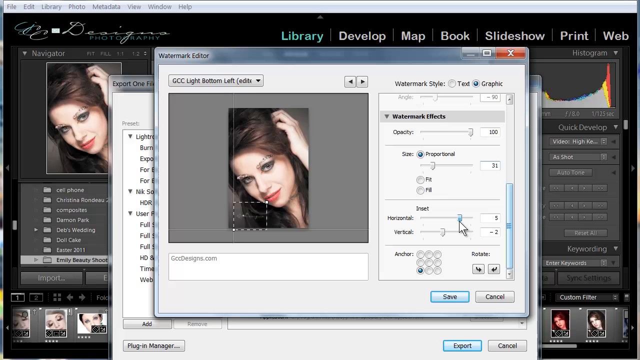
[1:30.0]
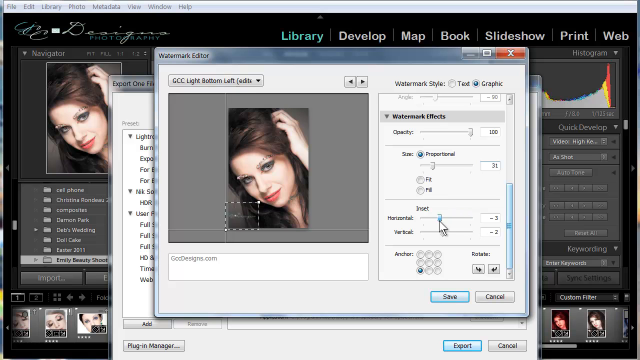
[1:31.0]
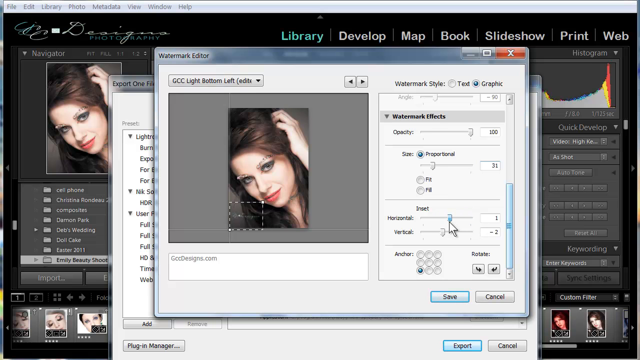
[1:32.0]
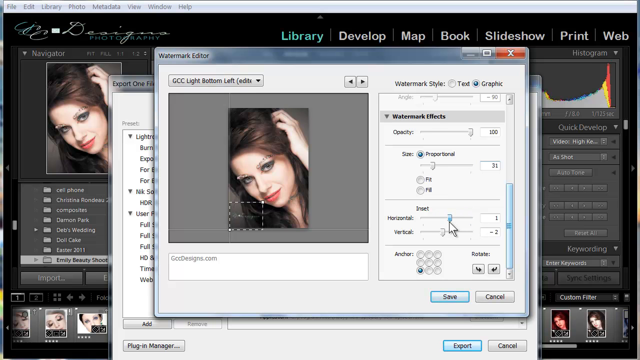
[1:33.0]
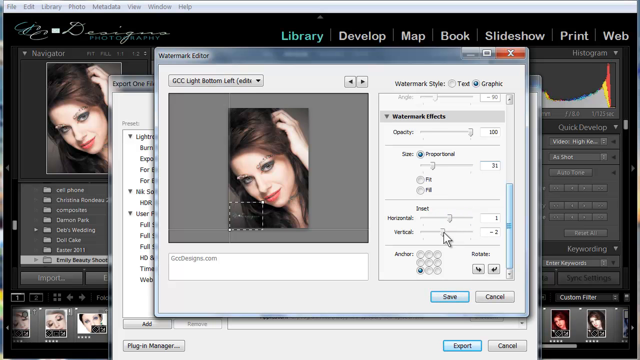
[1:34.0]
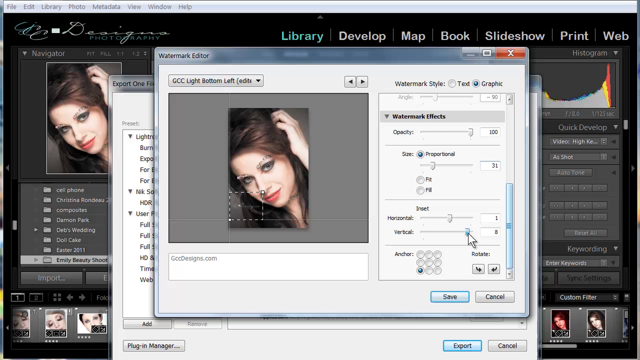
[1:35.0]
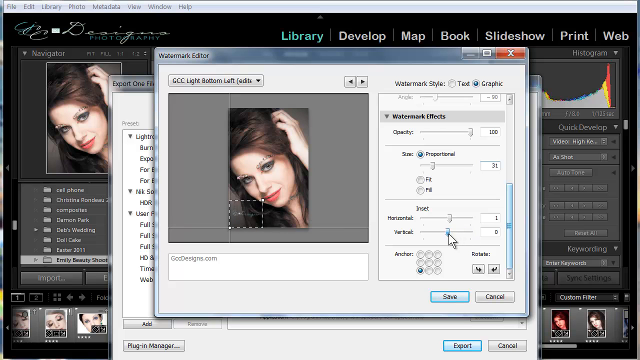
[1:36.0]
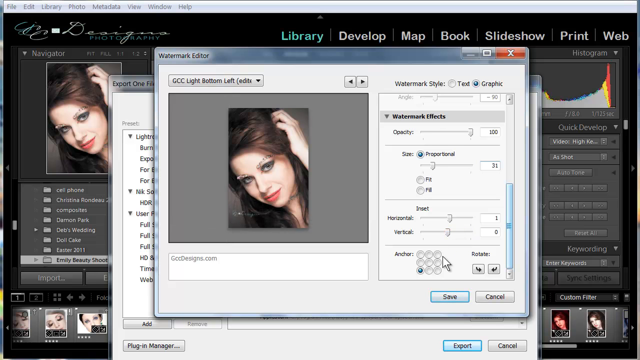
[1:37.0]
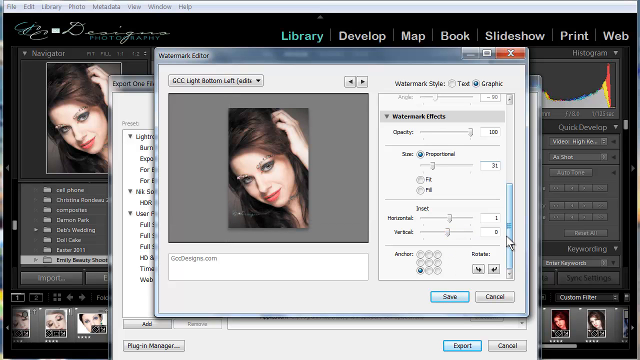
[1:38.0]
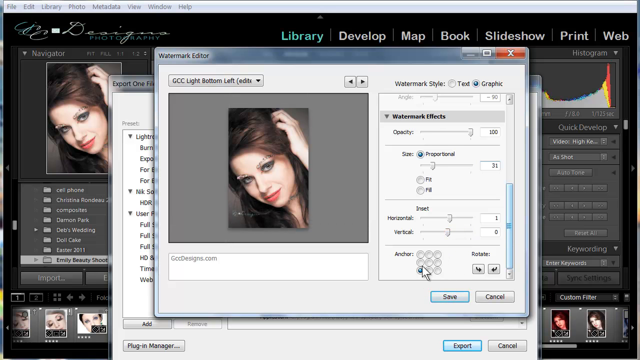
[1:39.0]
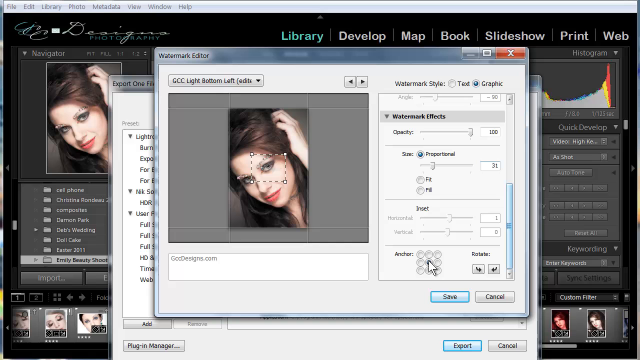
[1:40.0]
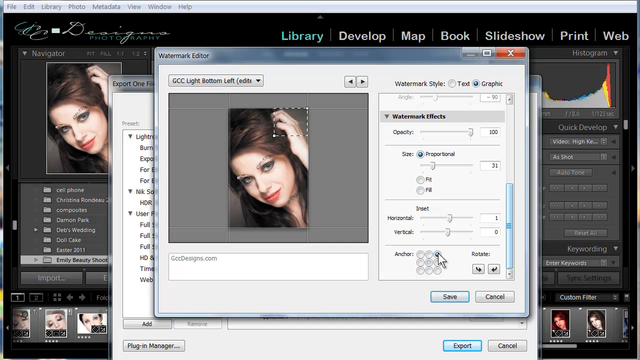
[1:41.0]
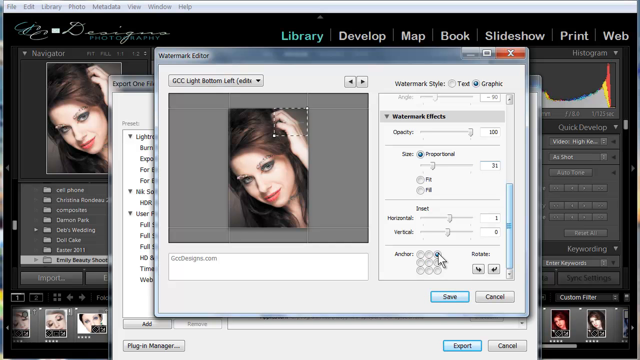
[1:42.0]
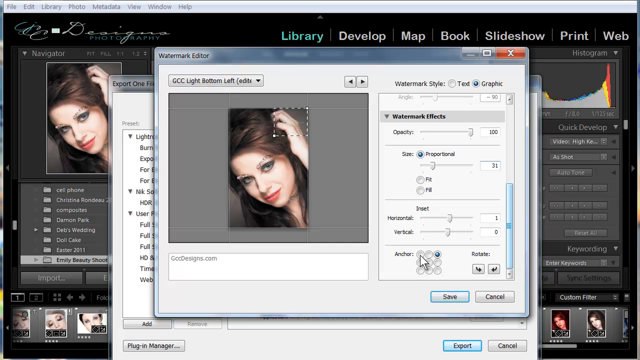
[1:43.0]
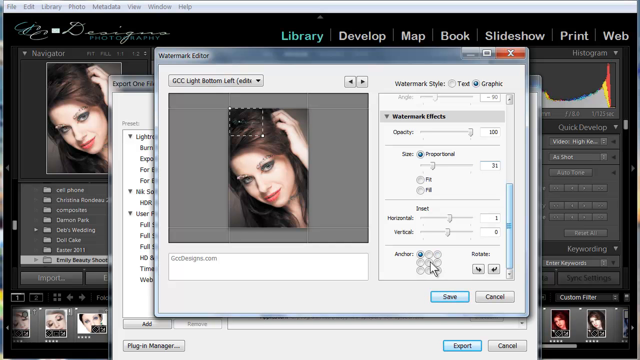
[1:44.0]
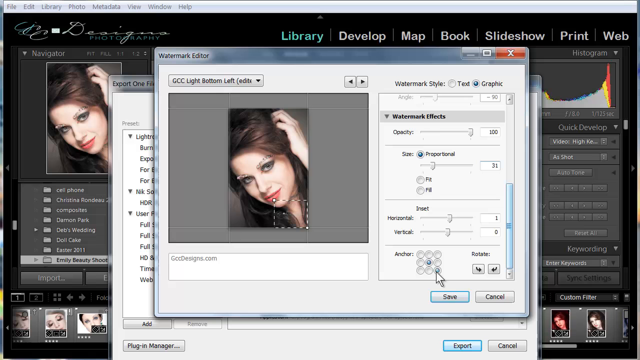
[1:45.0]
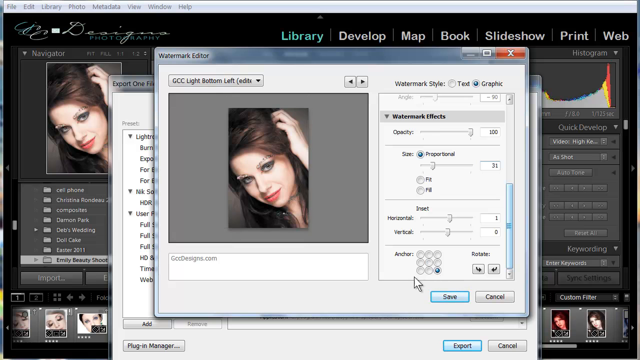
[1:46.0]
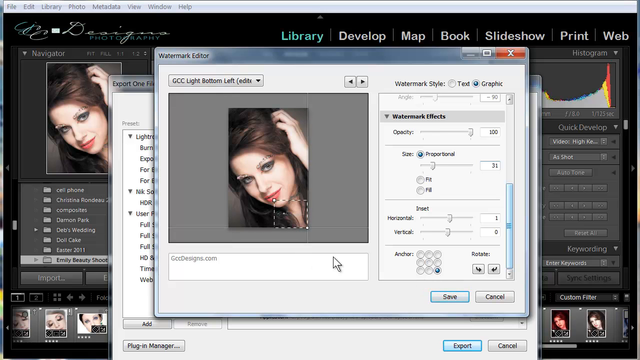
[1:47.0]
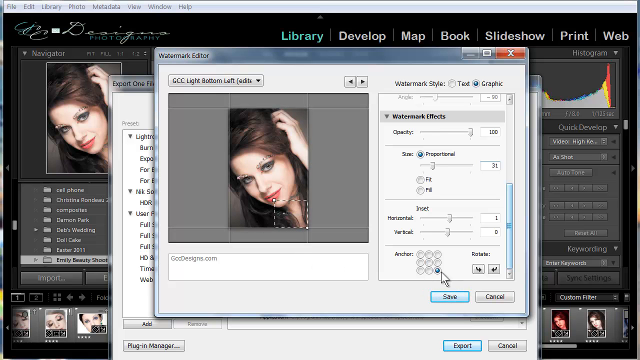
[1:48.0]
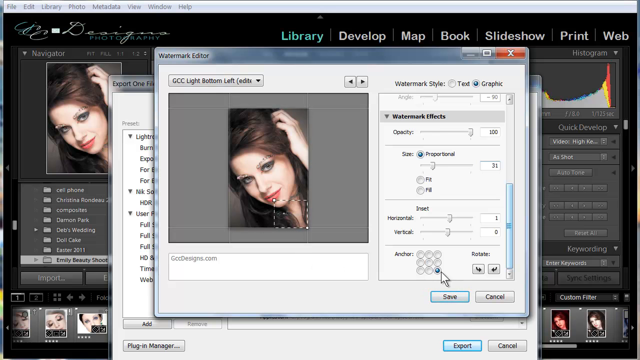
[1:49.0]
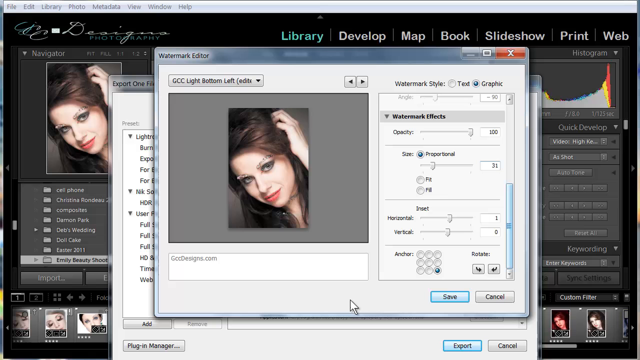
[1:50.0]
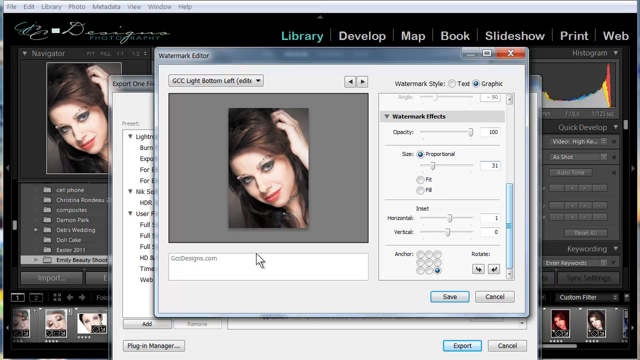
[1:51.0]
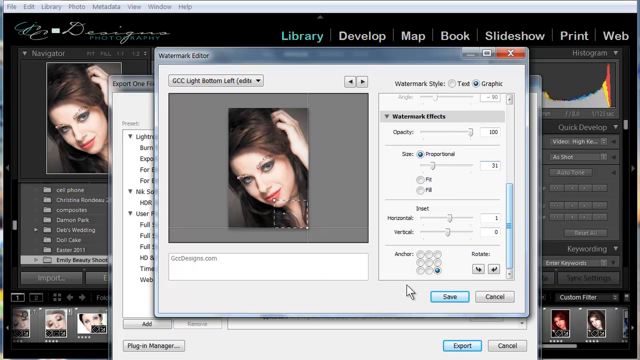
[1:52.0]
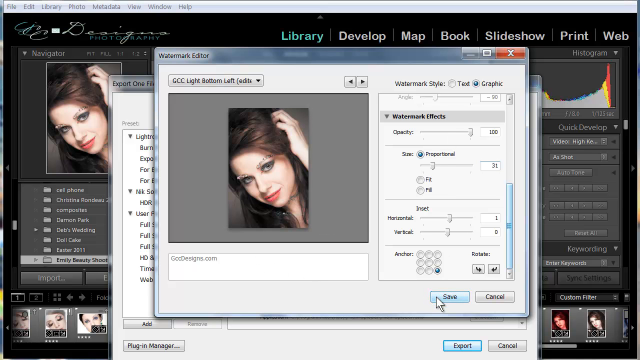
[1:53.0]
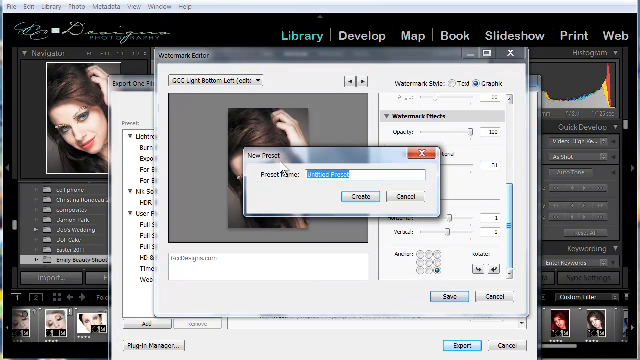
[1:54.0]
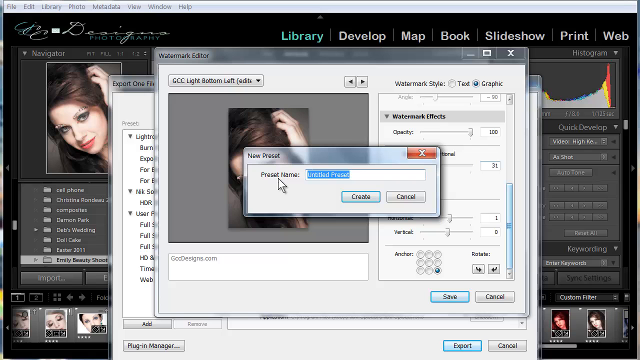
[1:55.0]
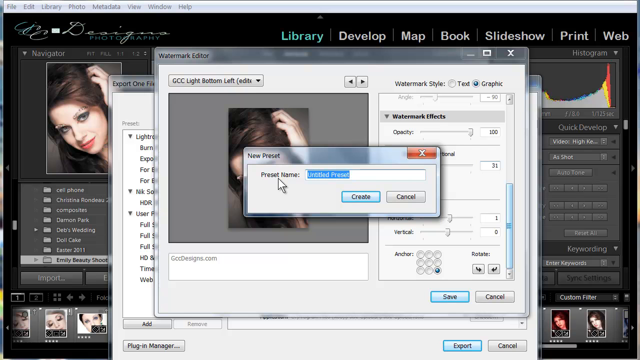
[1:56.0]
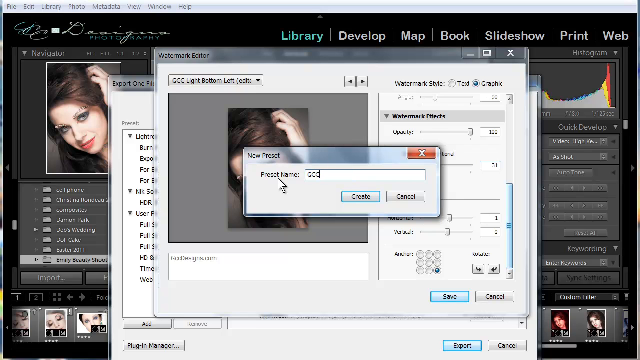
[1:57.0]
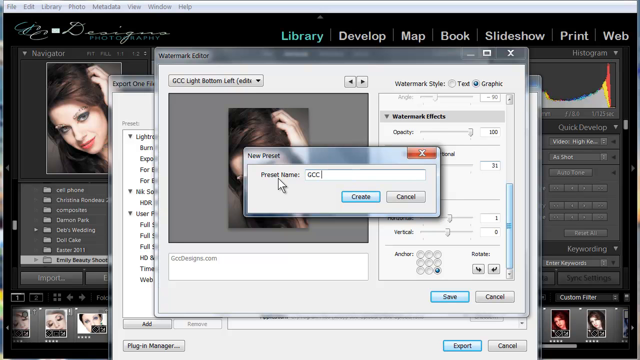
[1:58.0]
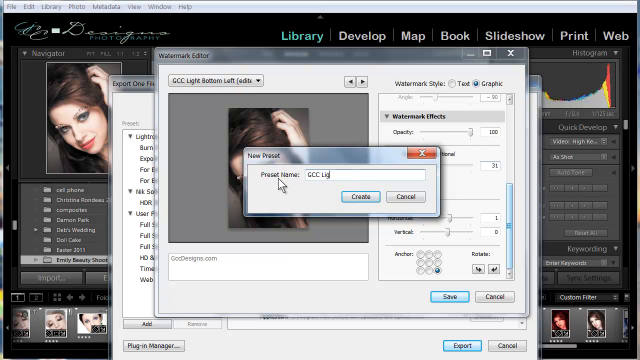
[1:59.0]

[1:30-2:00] In the watermark editor, the user drags the horizontal setting, moving the watermark horizontally across the woman's headshot, then switches to the vertical setting and drags it up, moving the watermark vertically up the image. Next the user works with the anchor setting, originally set to the bottom left corner. Clicking the middle places the watermark right over the woman's eye; clicking the top right moves it to the top right corner, over the woman's hand; clicking the top left puts it over the woman's brown hair, and the watermark, which seems to be greenish-gray, almost blends in with it. The user clicks back to the middle anchor spot and then the bottom right, which places the watermark over the woman's neck. The user then clicks save, and a window appears reading "new preset" with a preset name box that currently says "untitled preset", plus create and cancel buttons. The user types "GCC light" into the preset name box.